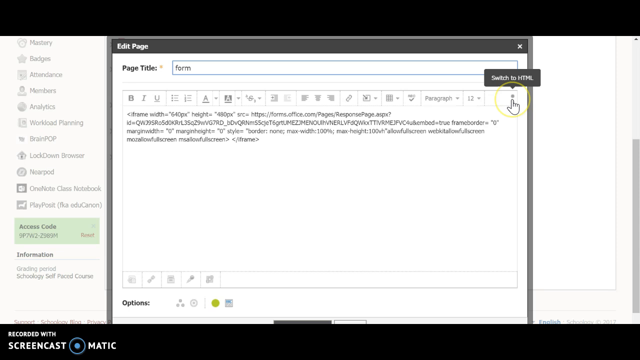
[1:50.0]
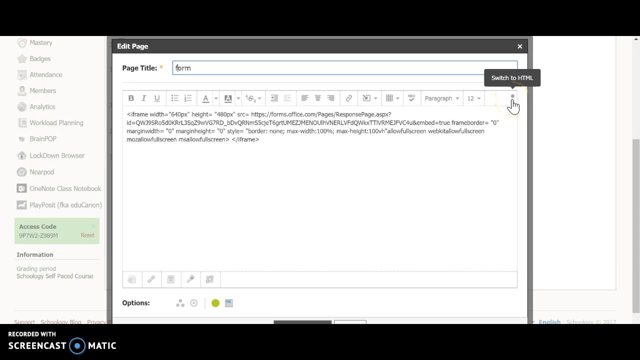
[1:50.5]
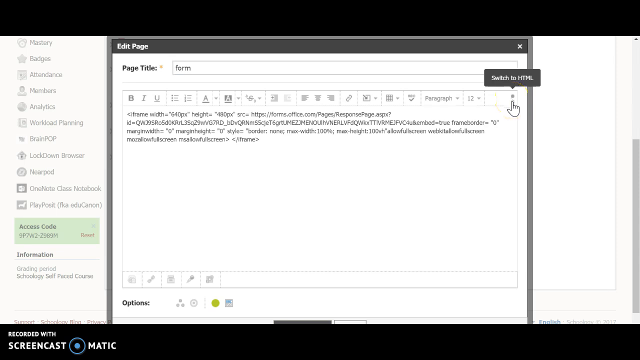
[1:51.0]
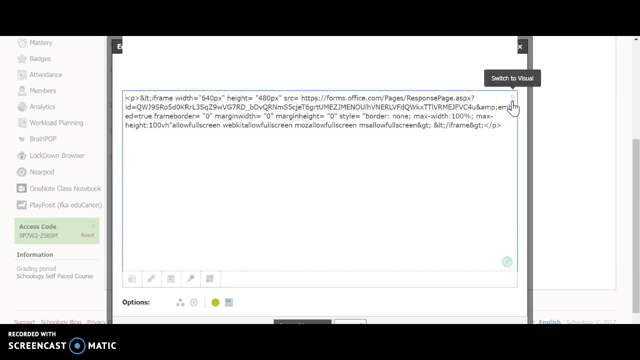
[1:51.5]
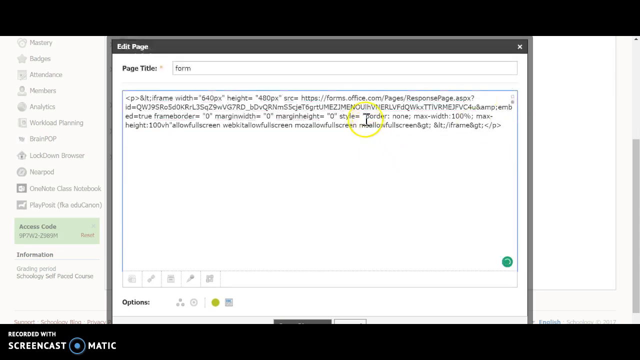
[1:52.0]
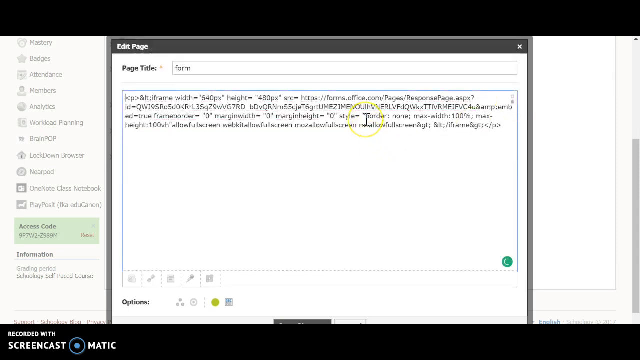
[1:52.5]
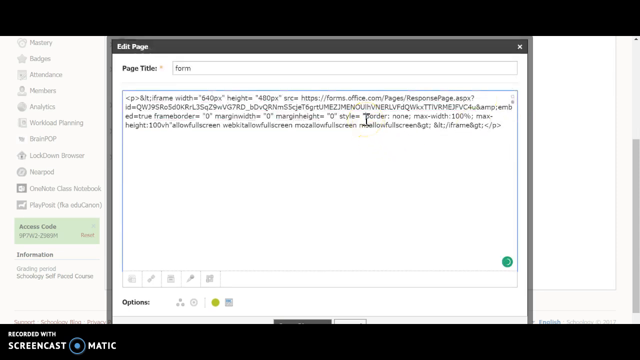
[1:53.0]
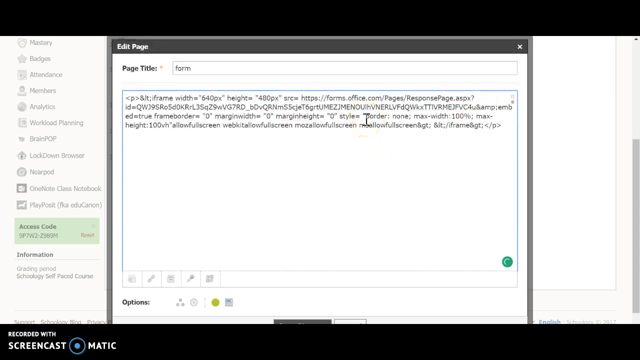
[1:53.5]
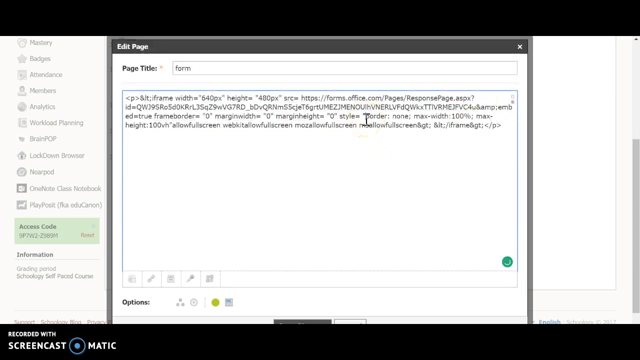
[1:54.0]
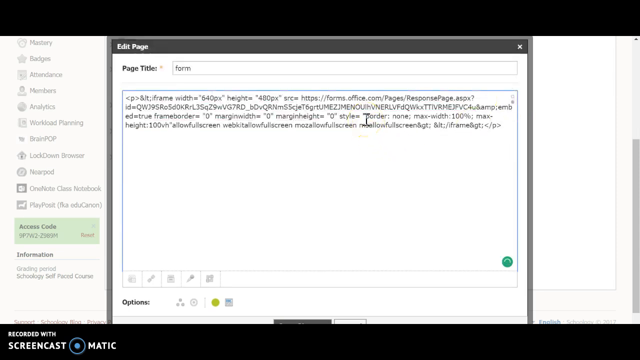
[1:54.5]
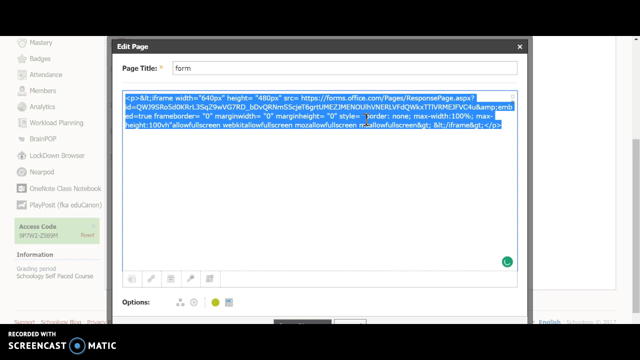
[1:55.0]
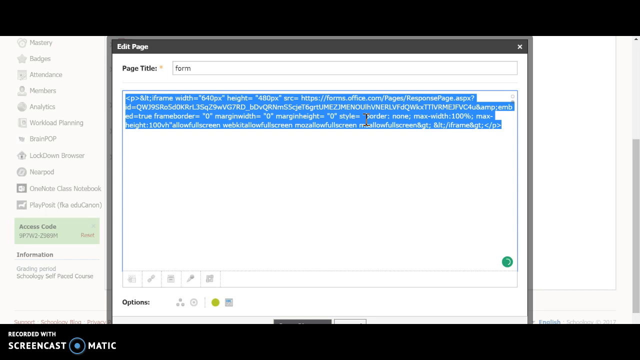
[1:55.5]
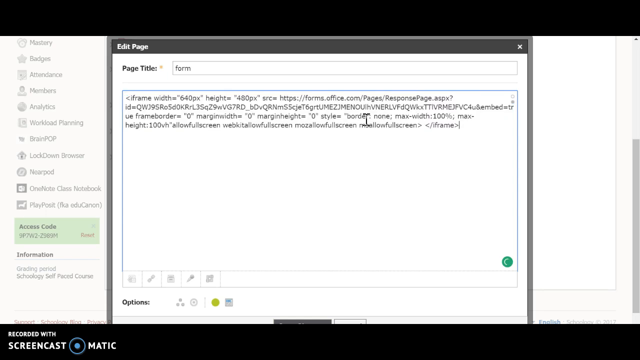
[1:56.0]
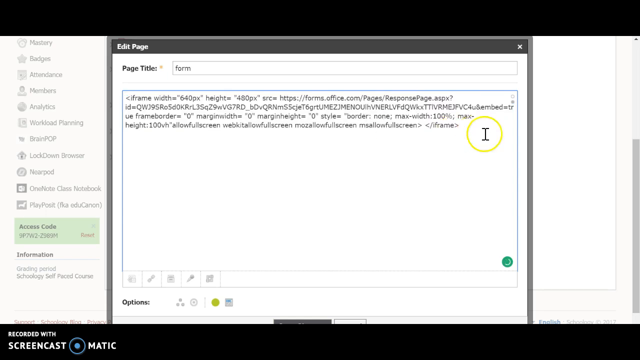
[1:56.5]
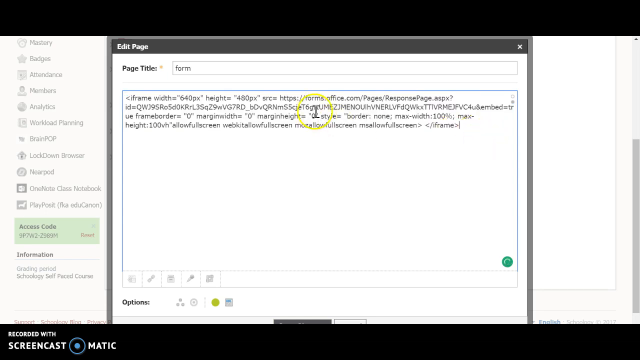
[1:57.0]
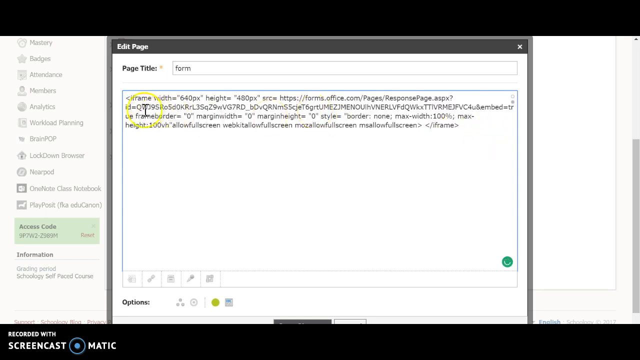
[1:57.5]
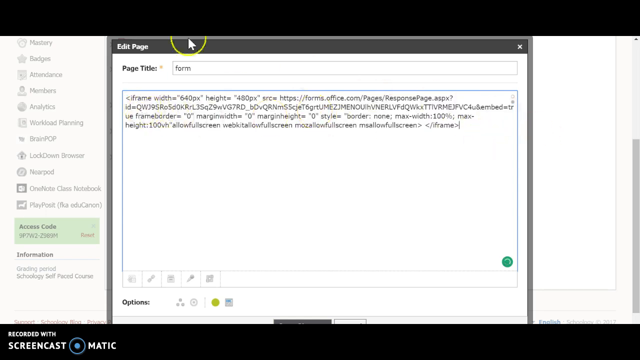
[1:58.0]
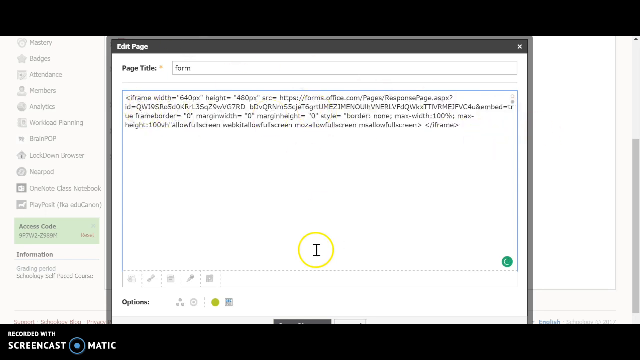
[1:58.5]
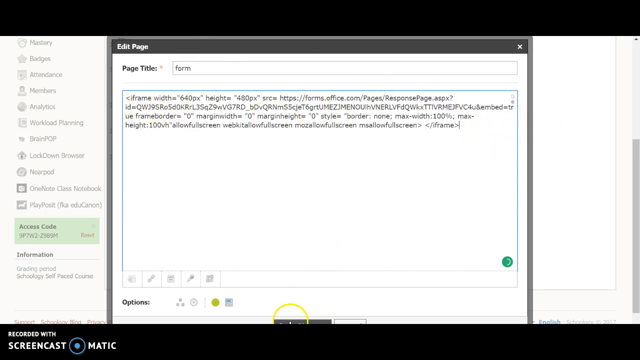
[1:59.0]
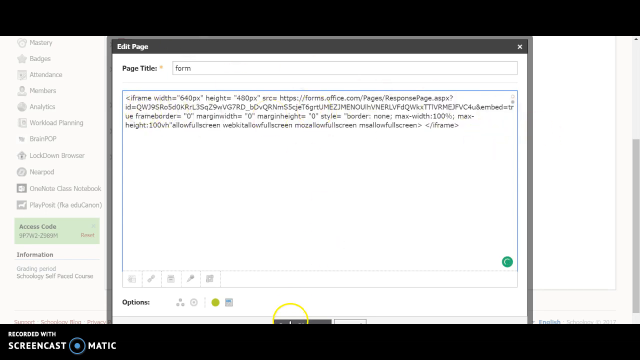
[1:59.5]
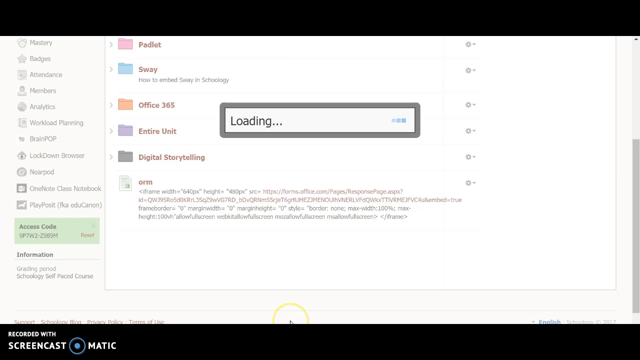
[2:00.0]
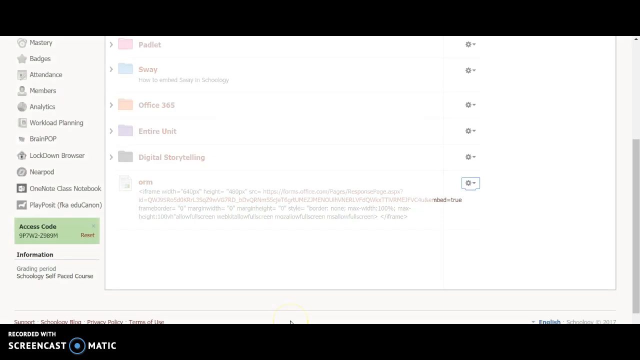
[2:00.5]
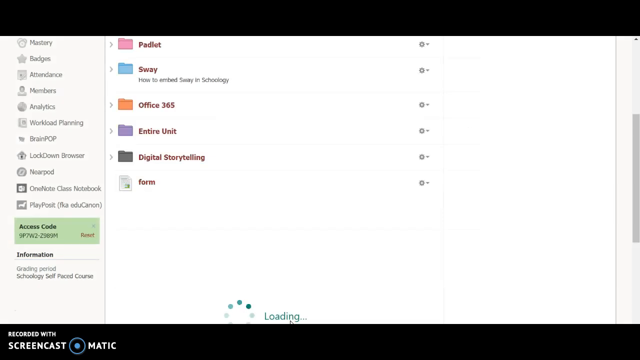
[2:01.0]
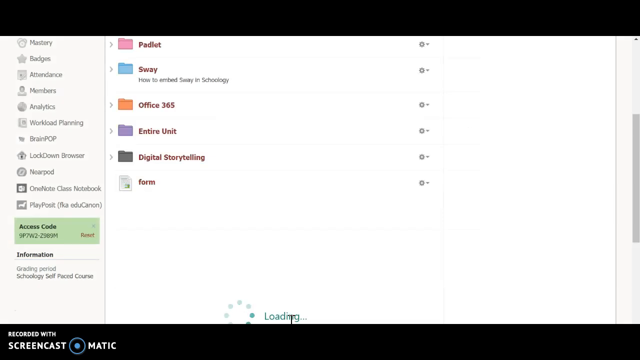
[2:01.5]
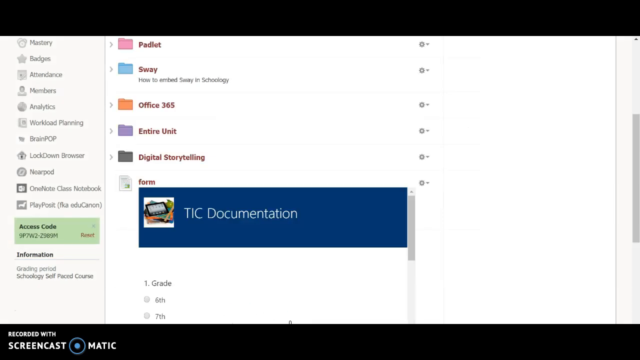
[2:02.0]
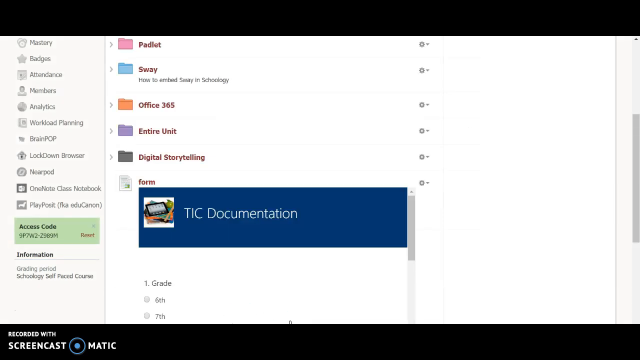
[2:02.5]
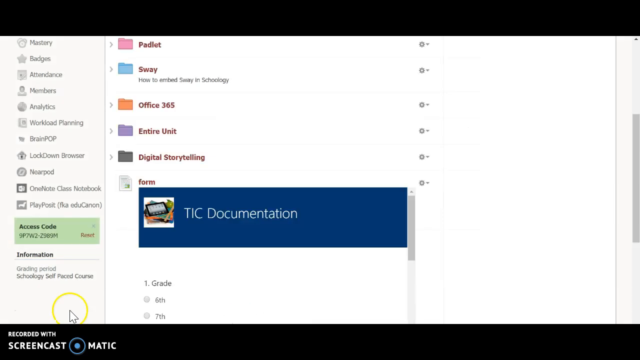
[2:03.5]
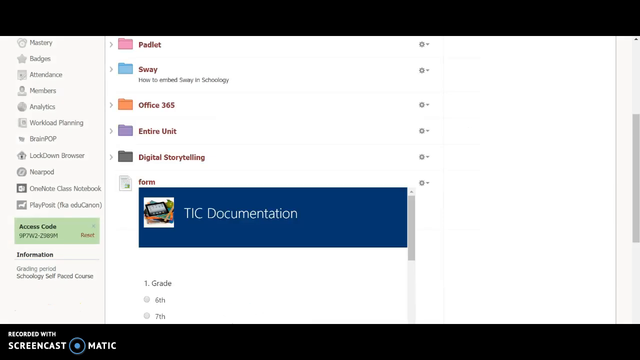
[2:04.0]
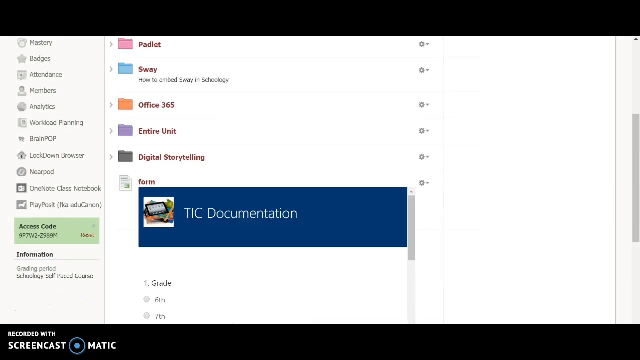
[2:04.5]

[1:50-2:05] The edit page shows "page title form," and the user hits a drop-down box. It says "switch to visual" where it says form, and underneath is a place to put information. They copy it and click a button that leads to loading, then to the TIC documentation page. A file that says "pamphlet" is pink. Sway is blue, with "how to embed Sway in Schoolology." An orange folder is "Office 365," purple is "entire unit," and black is "digital storytelling." Then it says "form," "TIC documentation" and "grade," with little circles for "6th," "7th" and "8th" to choose the grade. It then goes to an orange screen that says "Sarah Johnson" in the upper right with a picture of her, and next to that are a bell, a gear icon and a question mark. Underneath it says "good evening" and "search online documents," with a little magnifying glass. It says "install Office 2016," and under that "other installs," with little icons for different things to choose, 25 options in all.